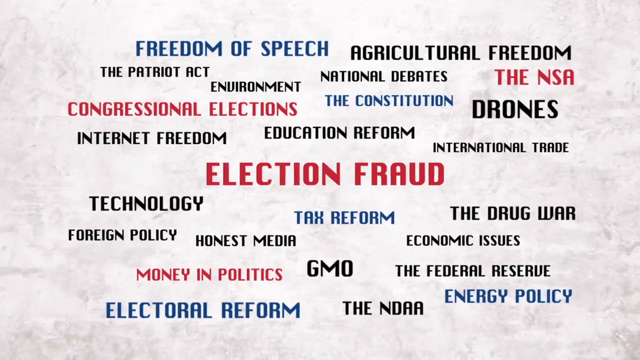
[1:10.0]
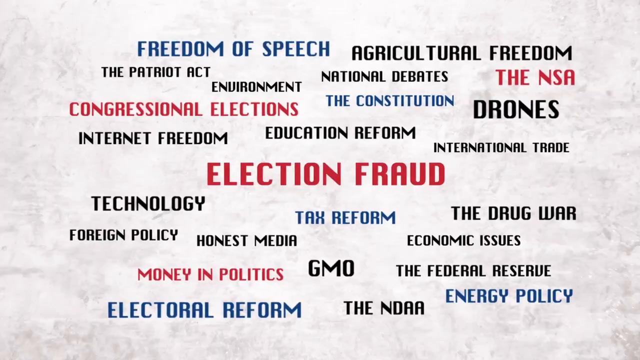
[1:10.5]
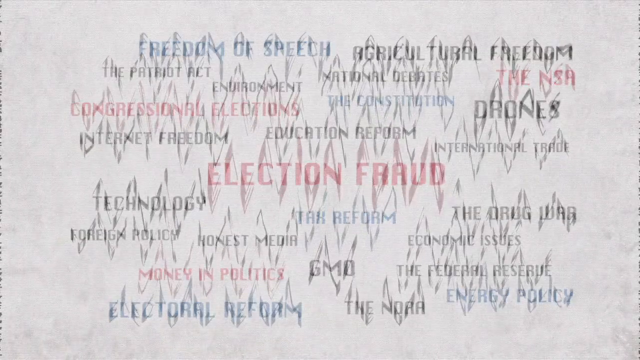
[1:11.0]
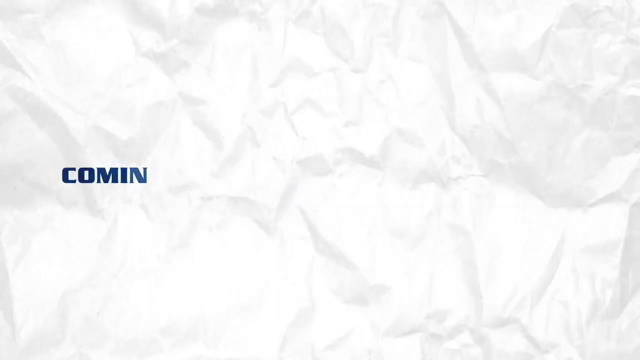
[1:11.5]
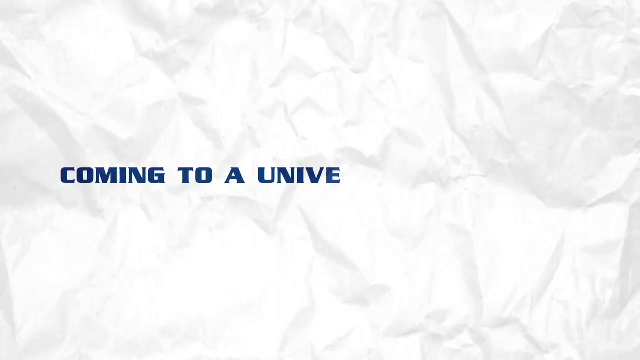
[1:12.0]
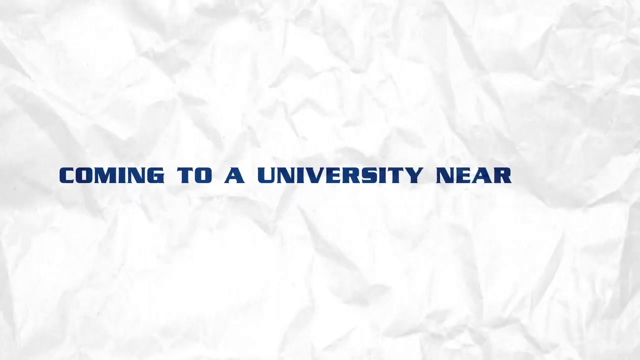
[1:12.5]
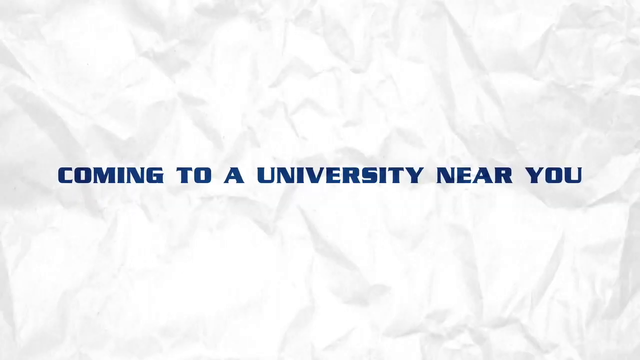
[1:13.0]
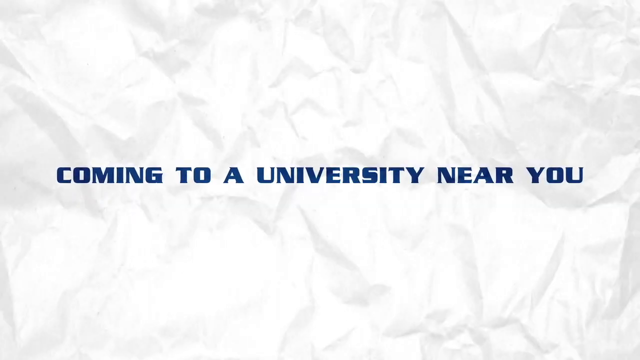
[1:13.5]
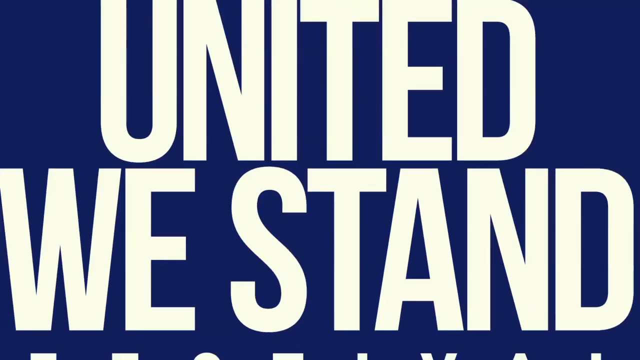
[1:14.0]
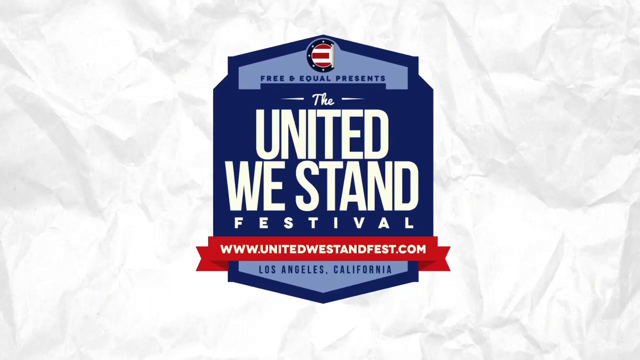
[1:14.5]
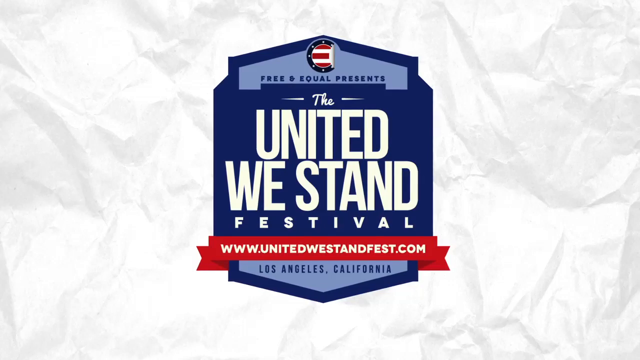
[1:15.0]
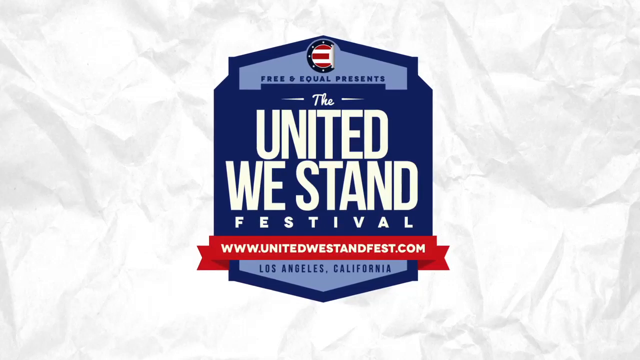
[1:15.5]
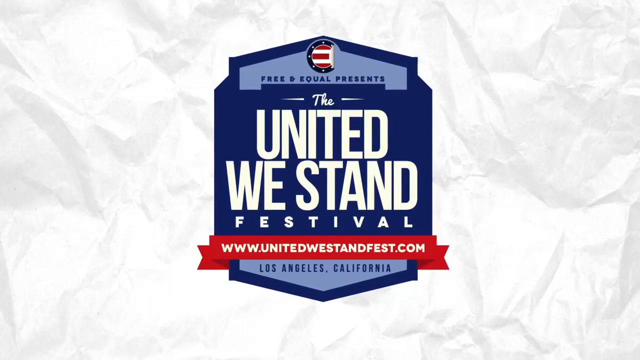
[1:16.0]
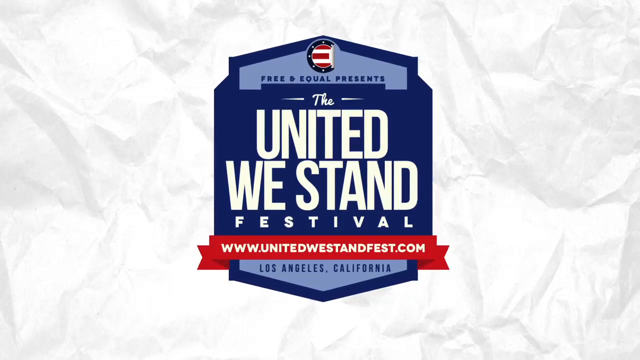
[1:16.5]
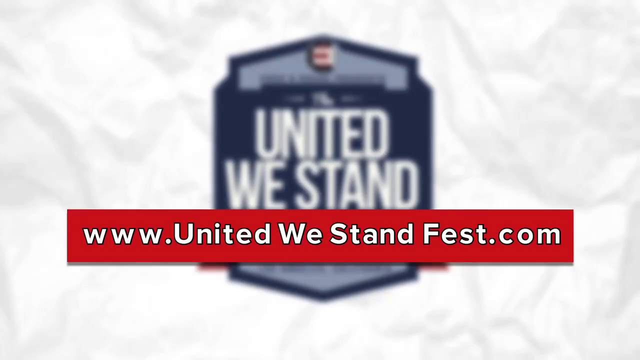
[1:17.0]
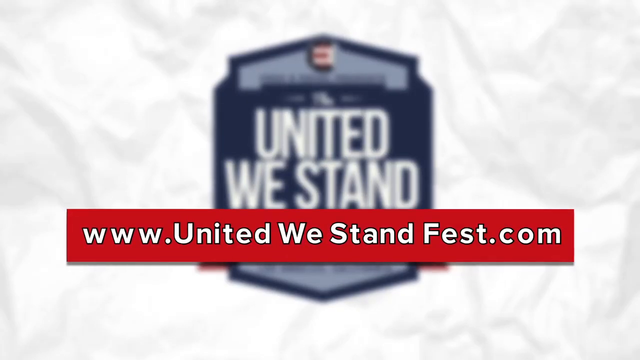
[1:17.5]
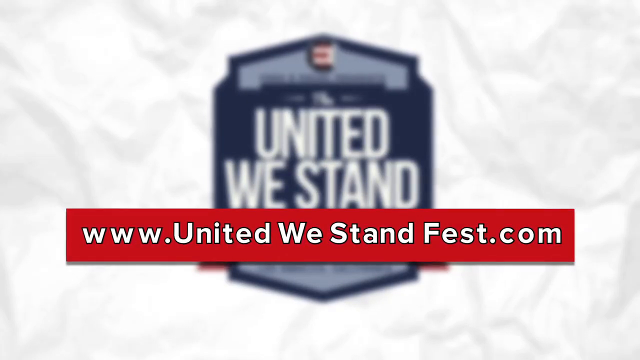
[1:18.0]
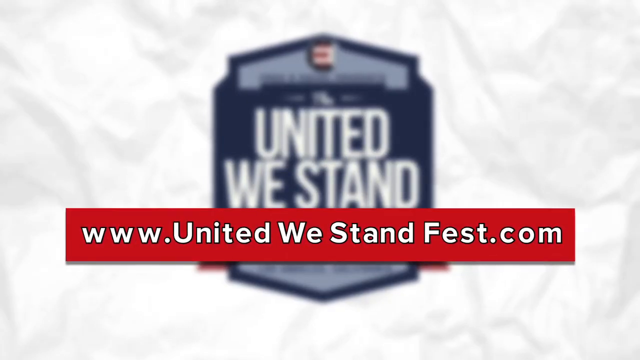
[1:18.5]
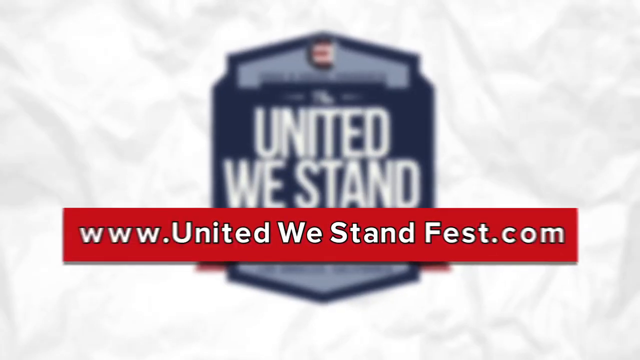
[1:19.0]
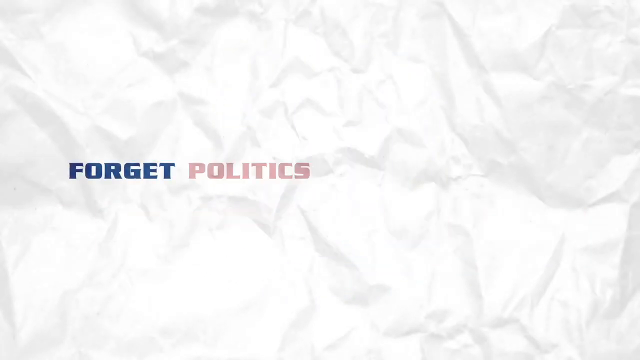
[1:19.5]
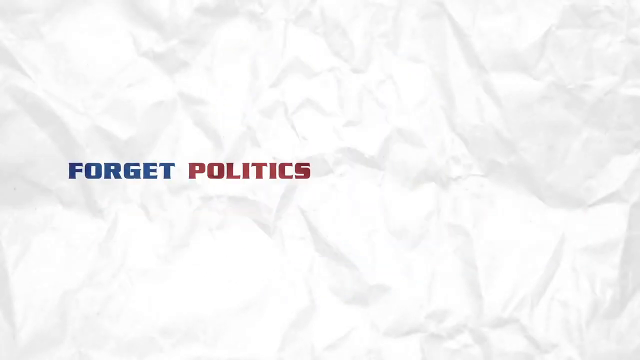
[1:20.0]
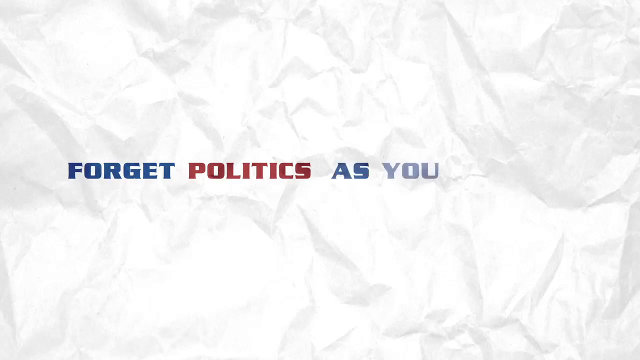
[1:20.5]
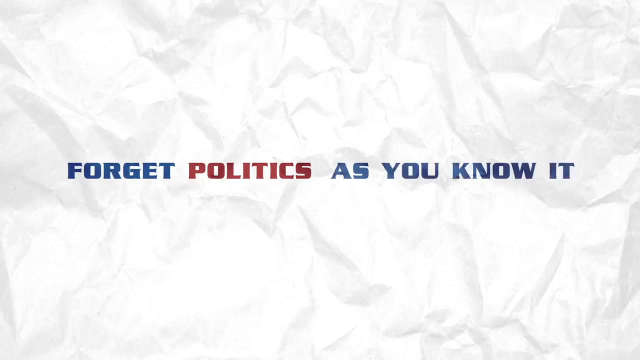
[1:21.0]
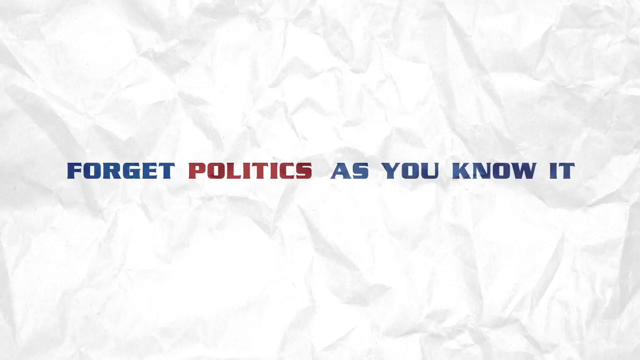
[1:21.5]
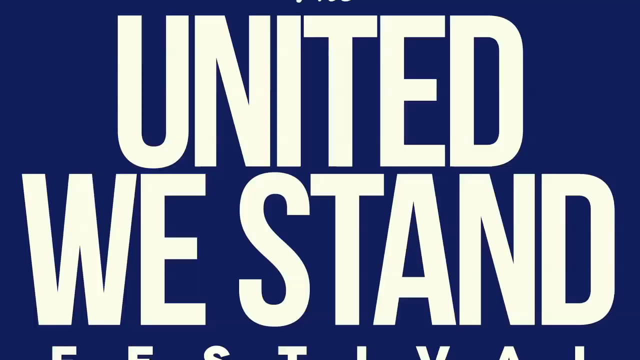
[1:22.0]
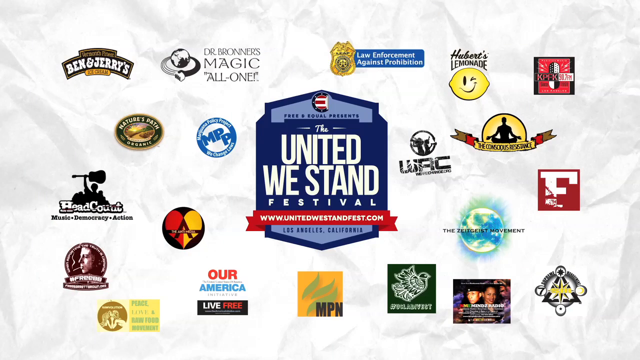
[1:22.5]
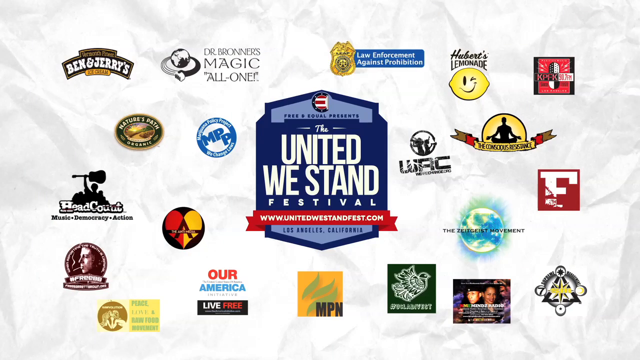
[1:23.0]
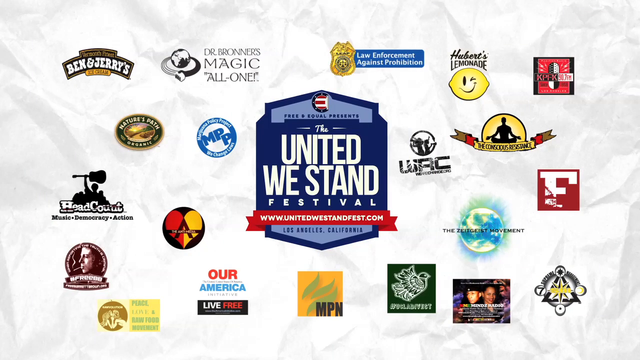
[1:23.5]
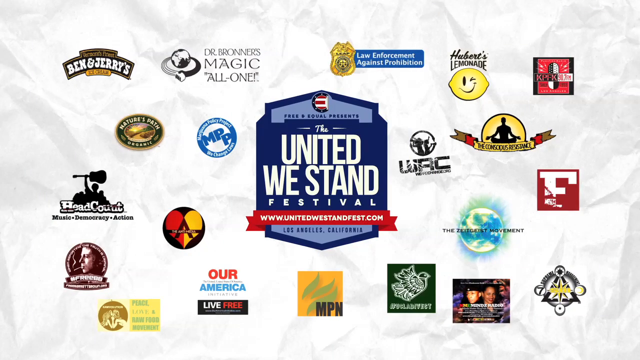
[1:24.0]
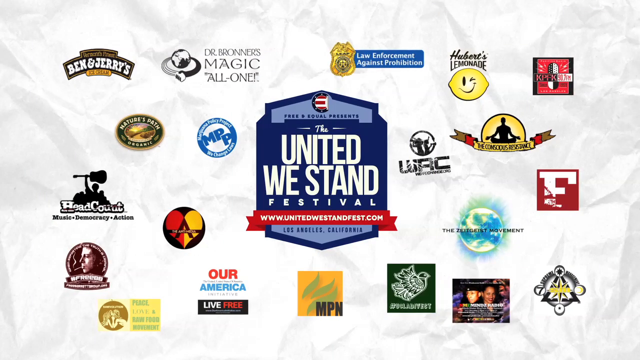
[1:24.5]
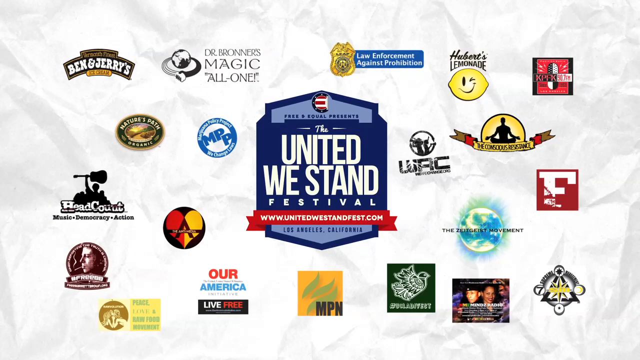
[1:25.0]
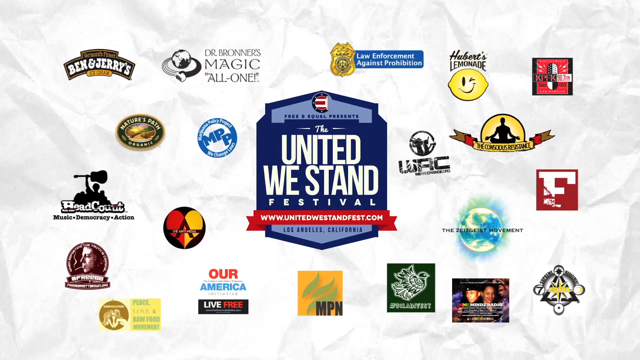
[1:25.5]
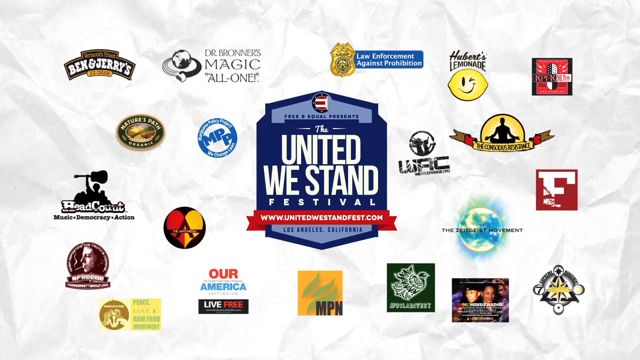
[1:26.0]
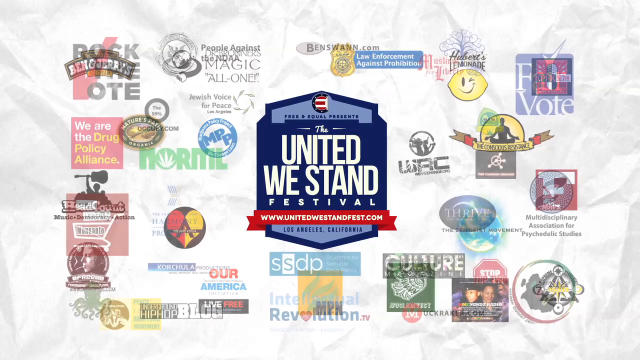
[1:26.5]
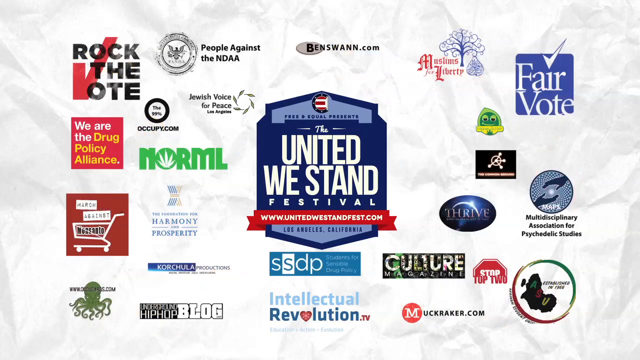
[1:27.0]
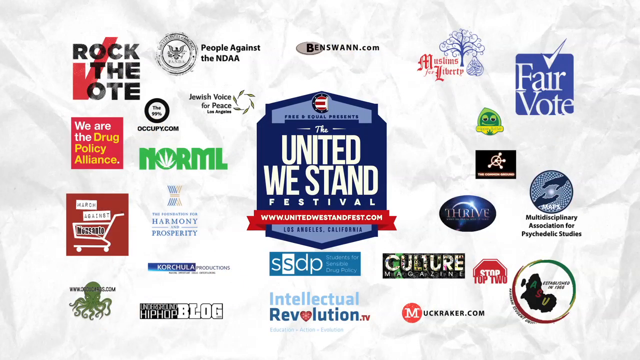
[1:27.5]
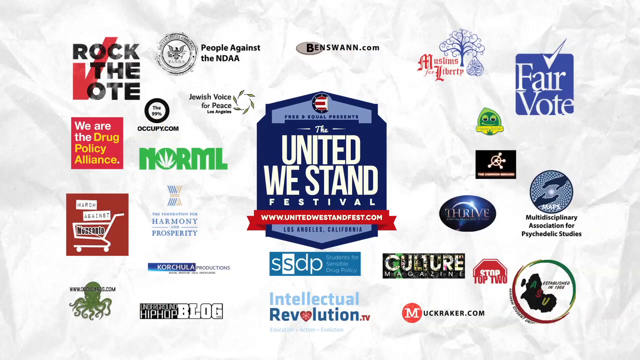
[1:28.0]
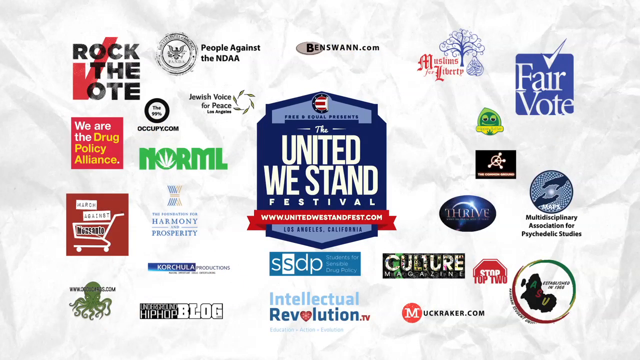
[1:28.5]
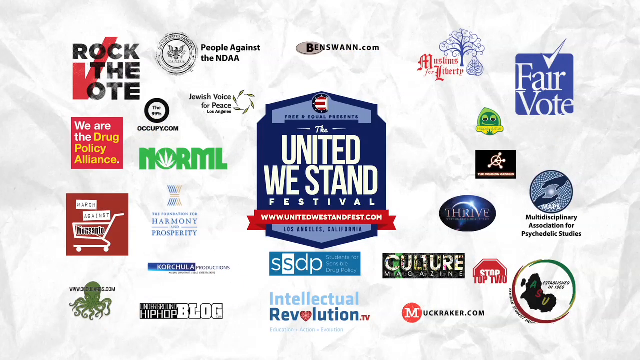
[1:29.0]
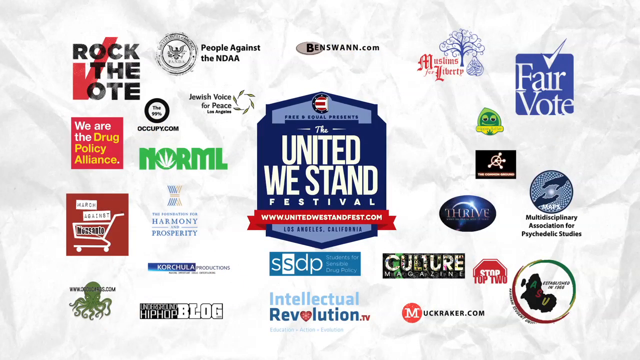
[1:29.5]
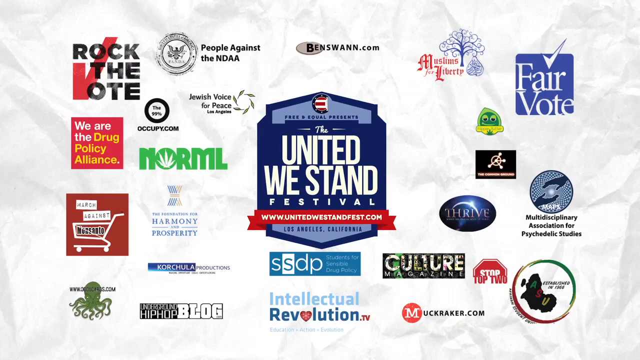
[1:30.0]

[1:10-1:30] The video shows "it's time for free and equal elections," "More choices, more voices, all elections shall be free and equal" and "united we stand." Musical guests are listed, including Public Enemy, Brother Ali and Immortal Technique. Then different companies are shown, apparently sponsors.